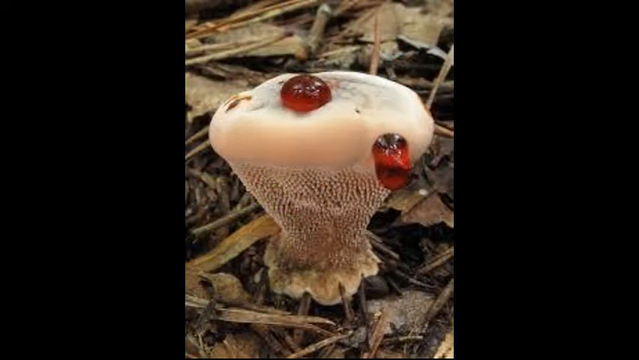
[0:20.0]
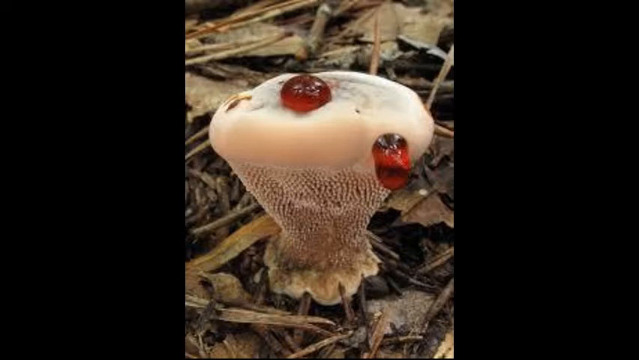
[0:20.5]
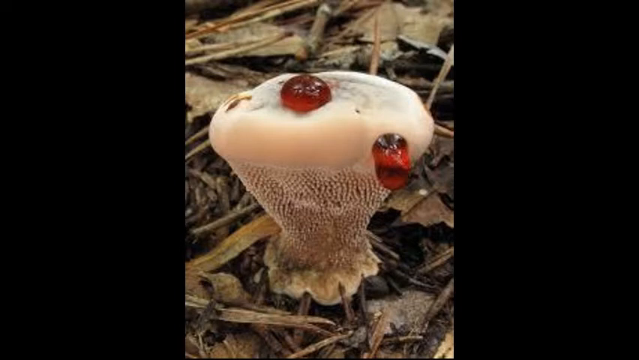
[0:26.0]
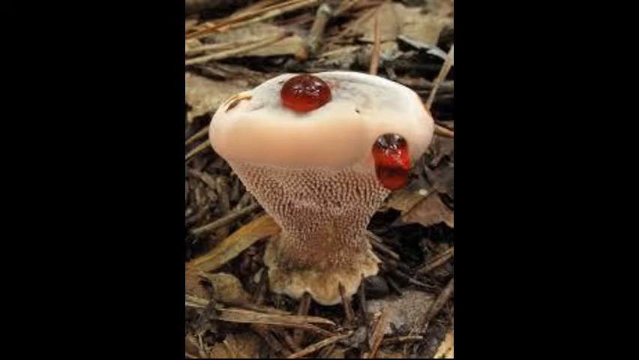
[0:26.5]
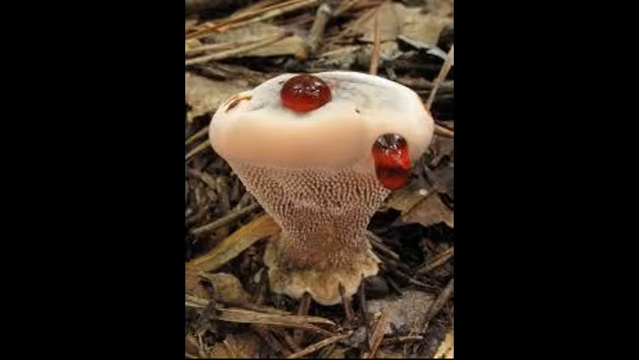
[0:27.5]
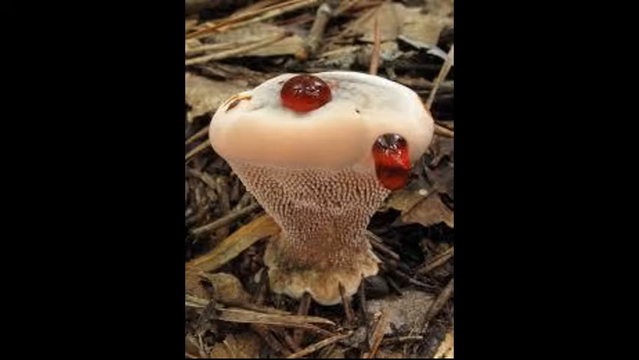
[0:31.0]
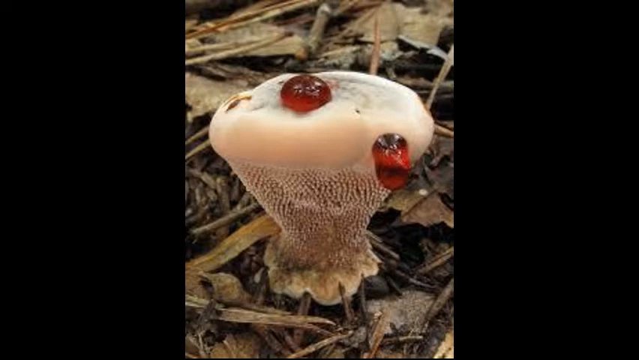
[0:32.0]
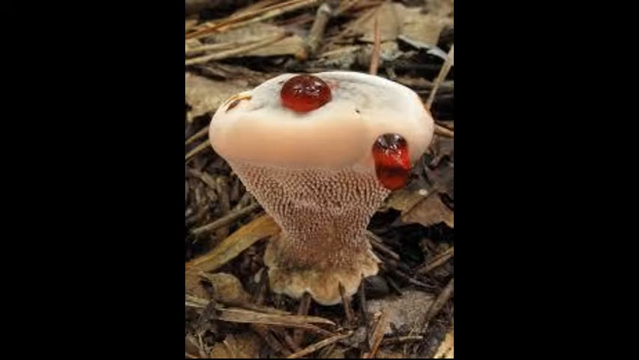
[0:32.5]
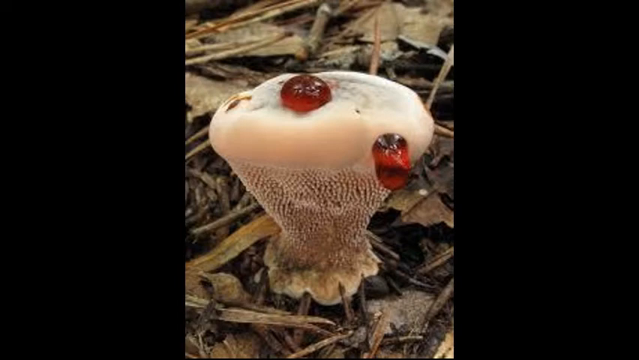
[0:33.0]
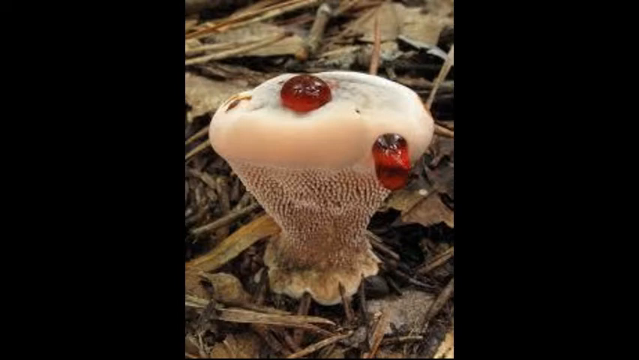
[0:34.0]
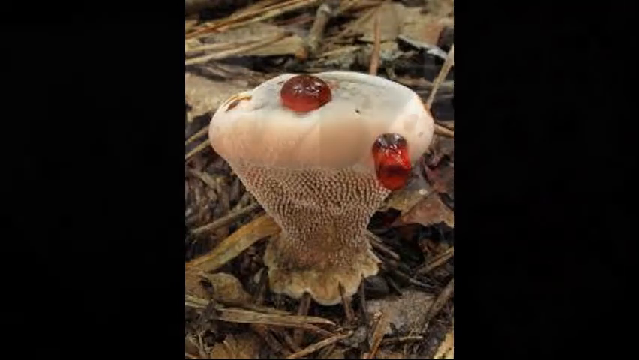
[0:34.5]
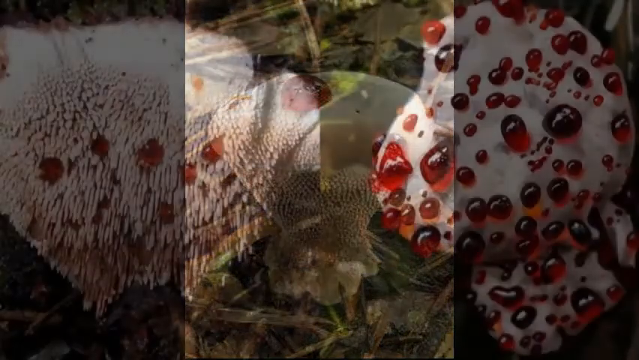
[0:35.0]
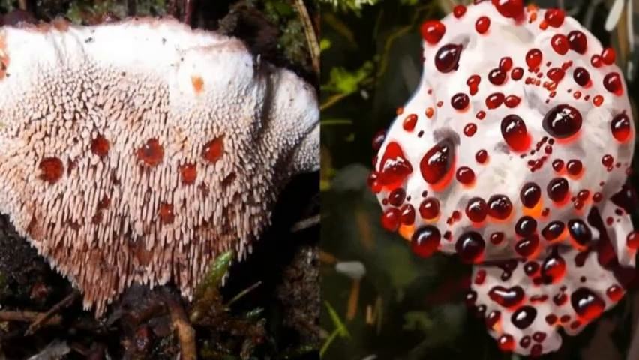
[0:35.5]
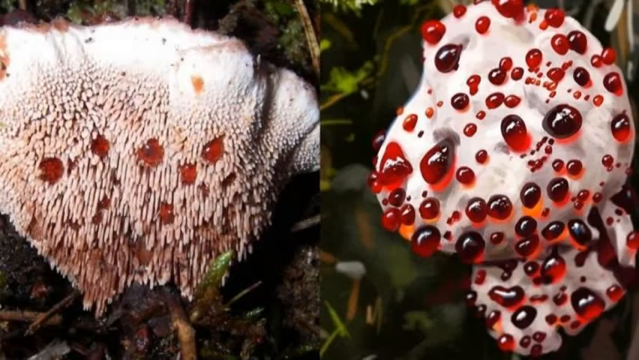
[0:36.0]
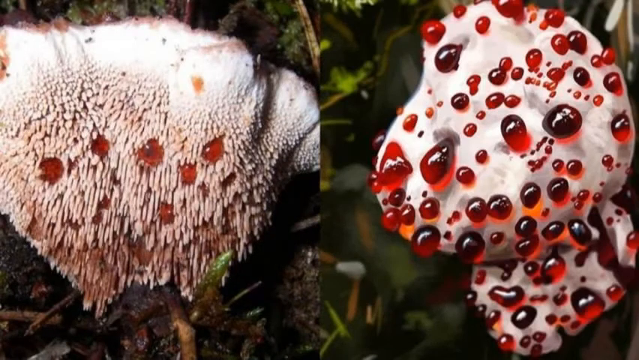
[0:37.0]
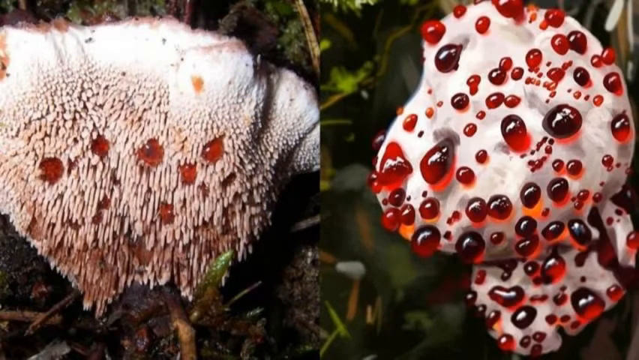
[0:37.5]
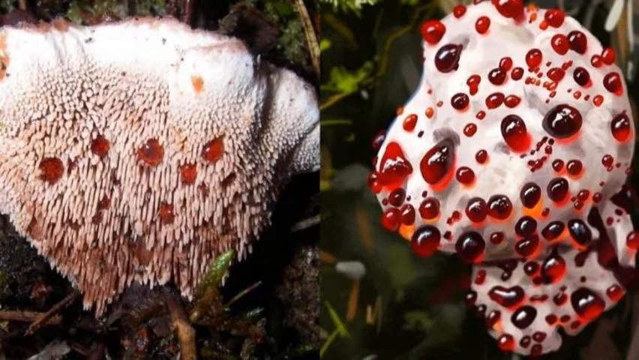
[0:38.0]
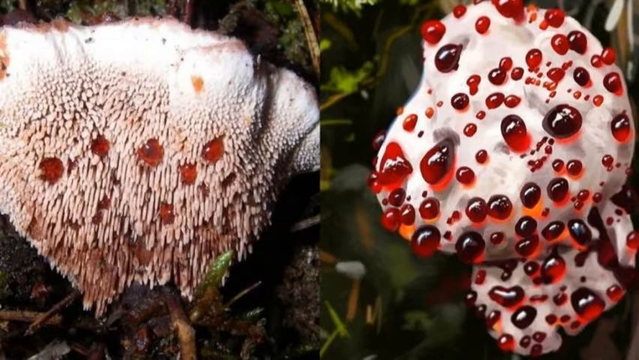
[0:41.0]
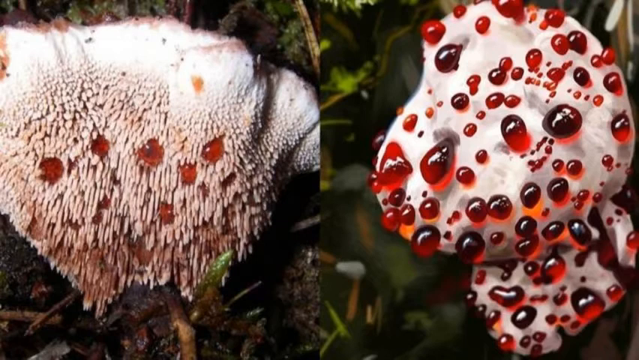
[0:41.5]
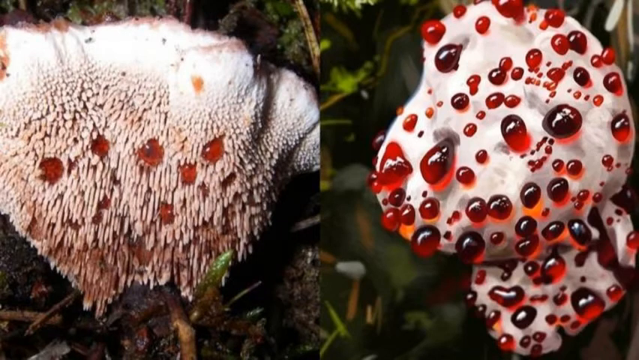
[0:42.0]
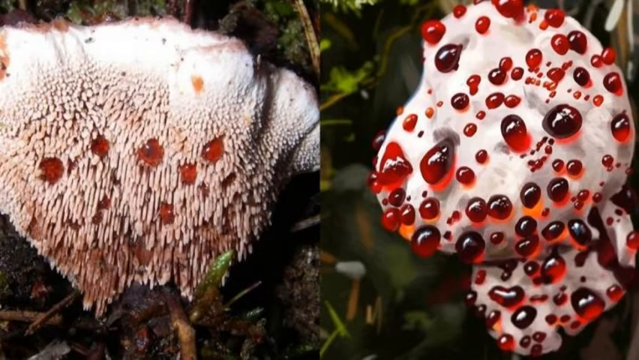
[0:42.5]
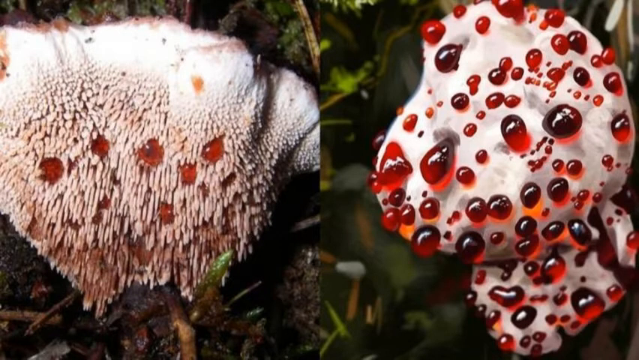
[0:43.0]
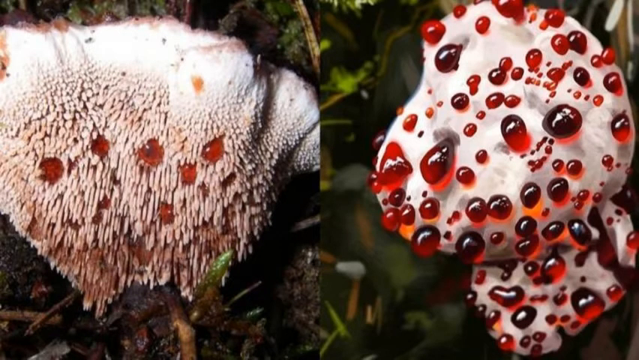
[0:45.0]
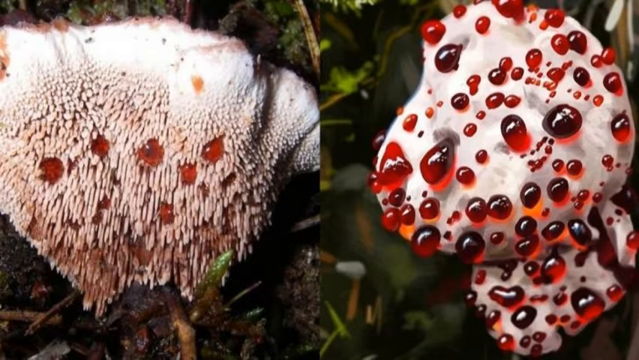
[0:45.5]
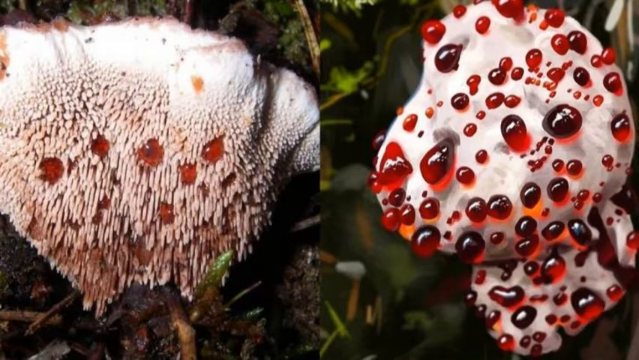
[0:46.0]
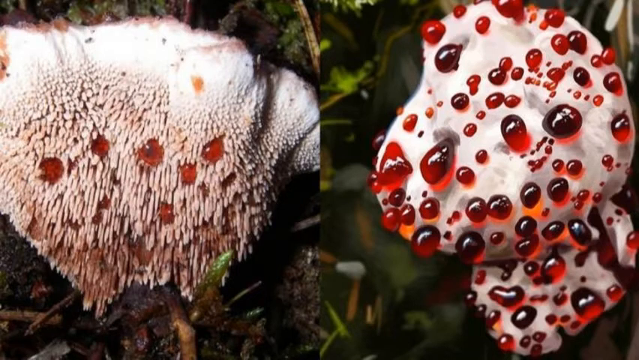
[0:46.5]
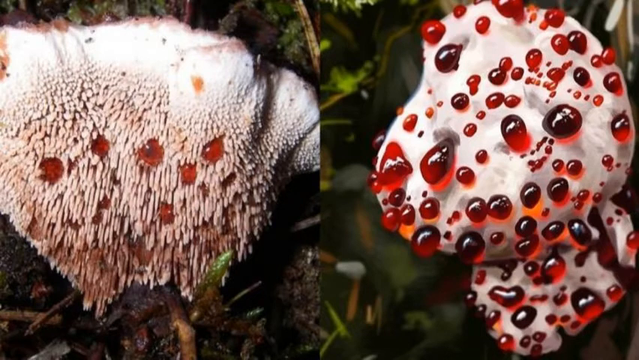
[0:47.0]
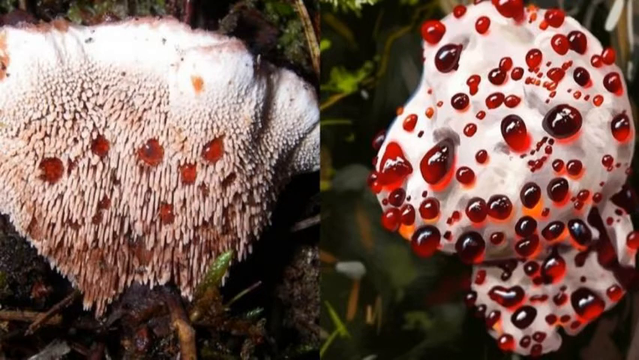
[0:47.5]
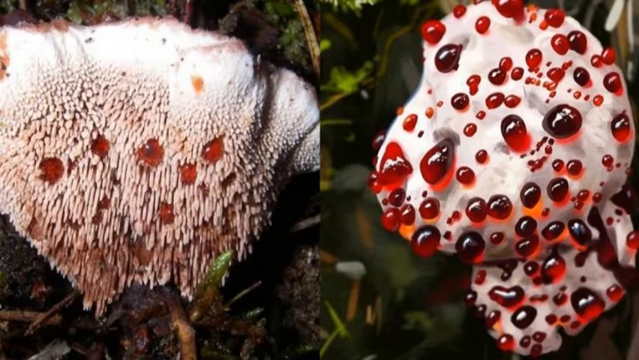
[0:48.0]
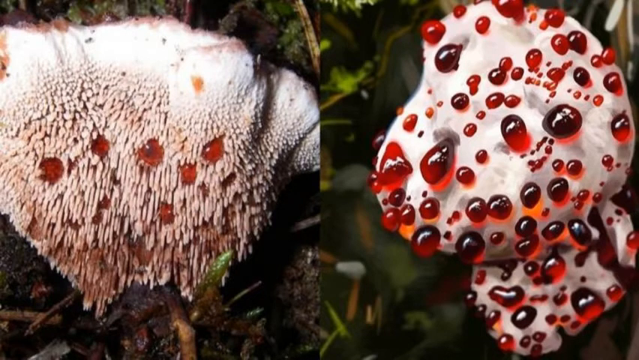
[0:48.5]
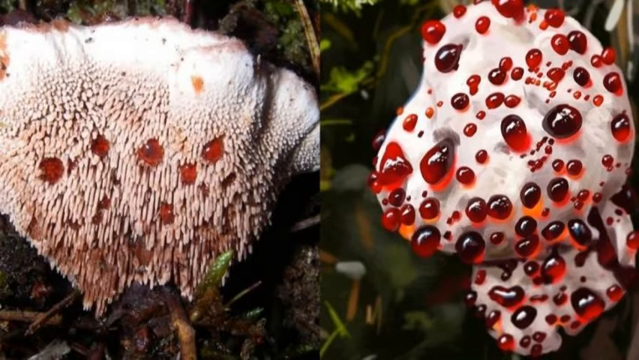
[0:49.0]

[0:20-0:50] A close-up image shows an individual fungus. It is quite small in height, with a large, flat white head at the top that is diamond-shaped, and small white tentacle-like bristles on the lower body. Two large red droplets of liquid are attached to the head, and one of the droplets appears to be sliding down the body of the fungus. It grows from a bed of twigs and leaves and appears to have grown in isolation, with no other fungus nearby. The next image shows two images side by side in a split screen comparing them: one is a fungus with small red blobs on its tentacles, and on the right is a fungus with a white surface covered in hundreds of red blobs.